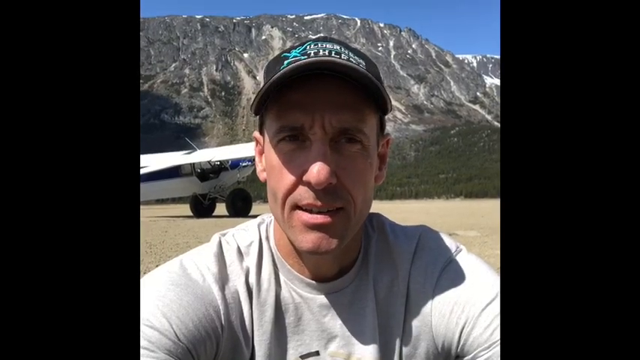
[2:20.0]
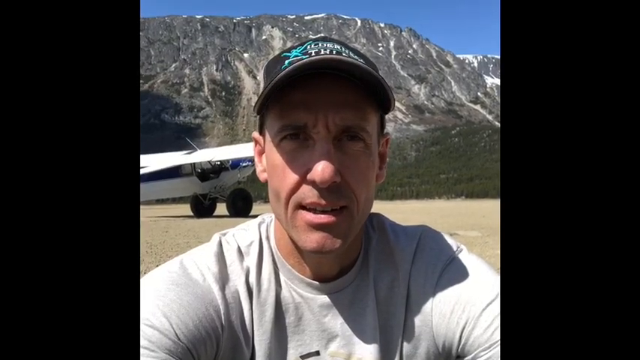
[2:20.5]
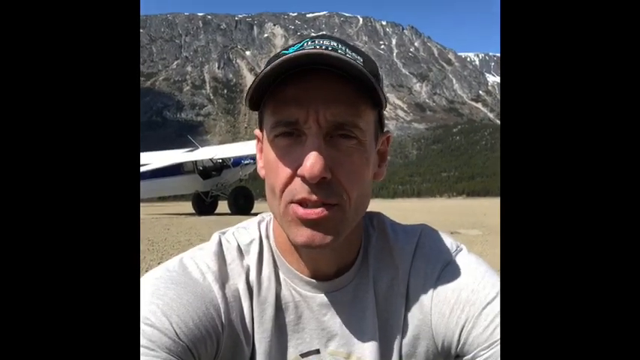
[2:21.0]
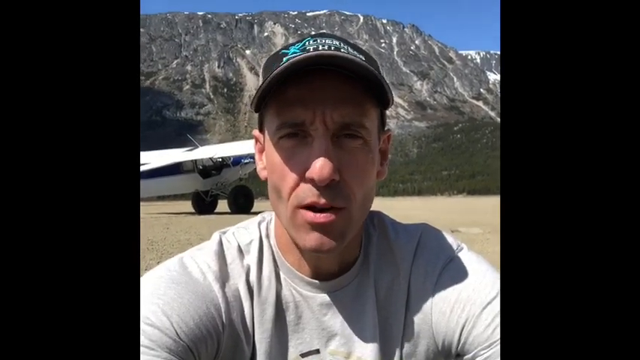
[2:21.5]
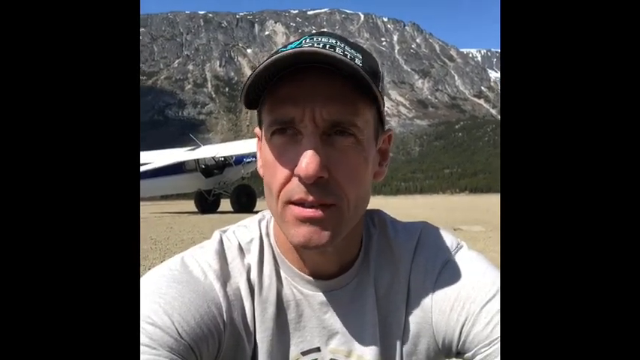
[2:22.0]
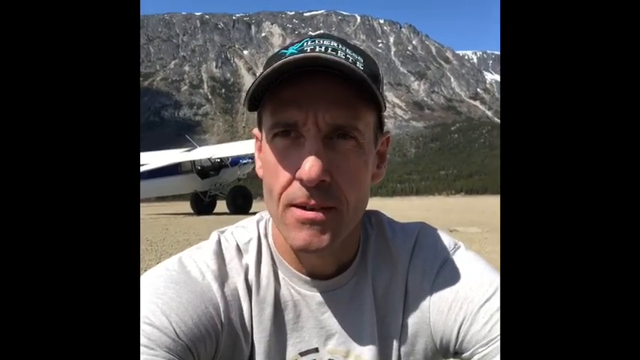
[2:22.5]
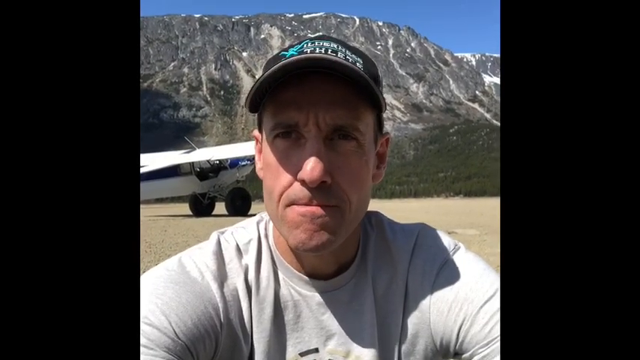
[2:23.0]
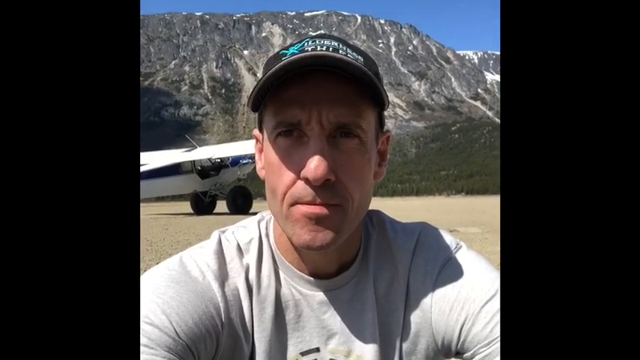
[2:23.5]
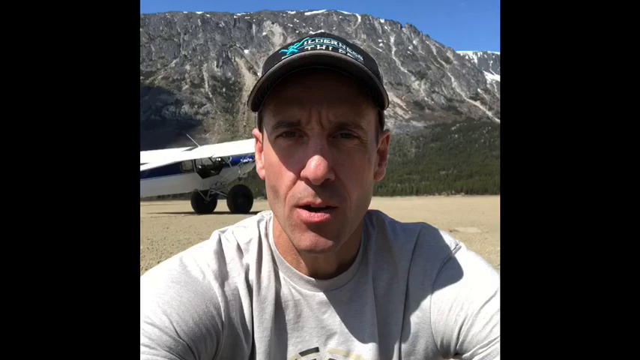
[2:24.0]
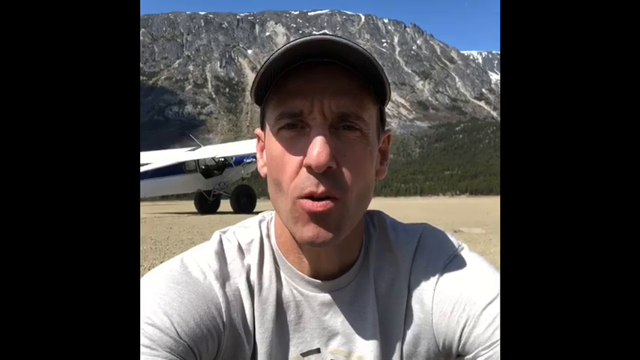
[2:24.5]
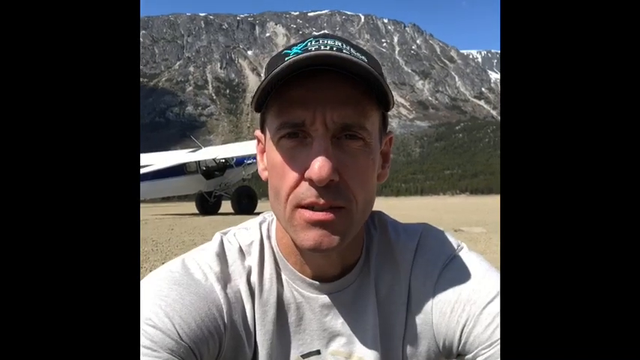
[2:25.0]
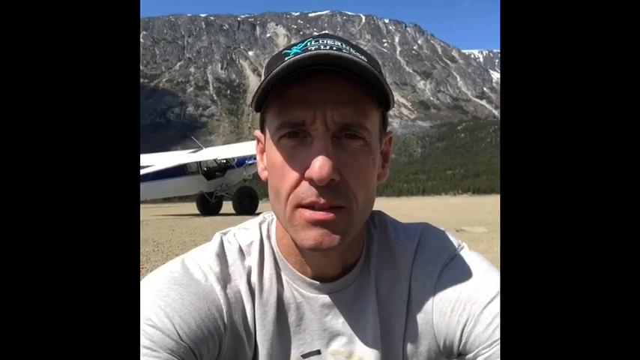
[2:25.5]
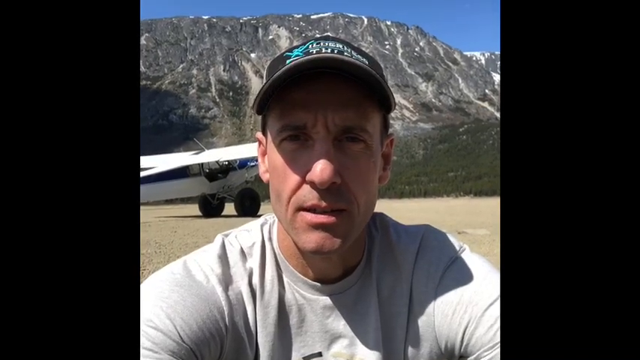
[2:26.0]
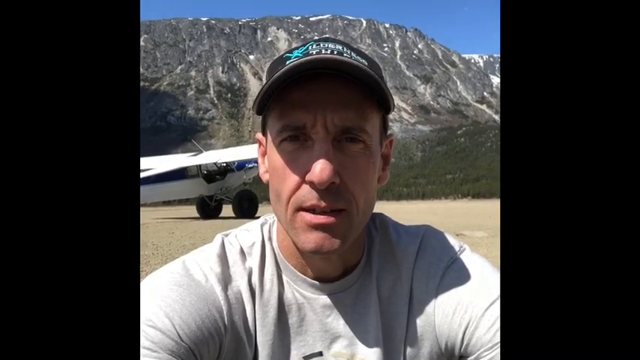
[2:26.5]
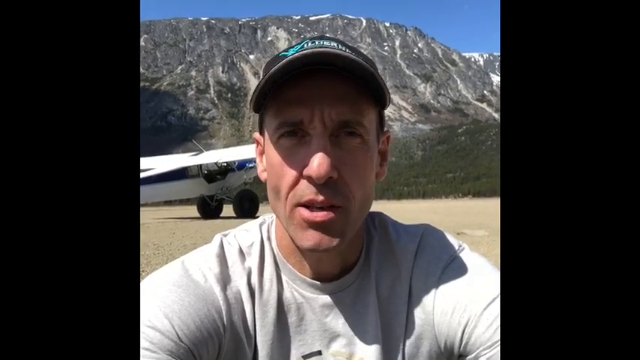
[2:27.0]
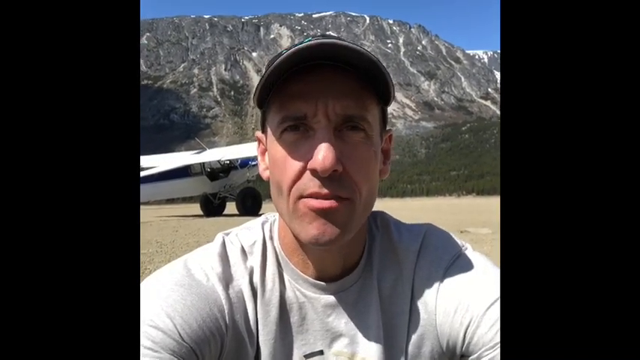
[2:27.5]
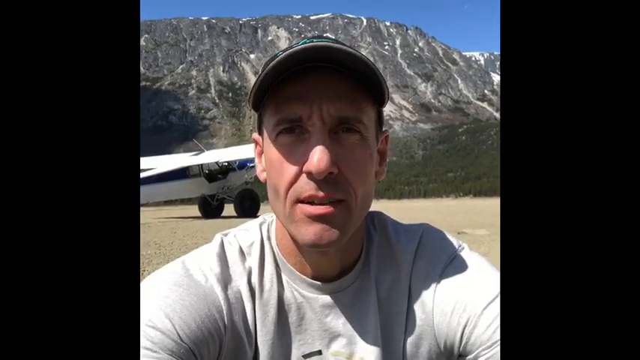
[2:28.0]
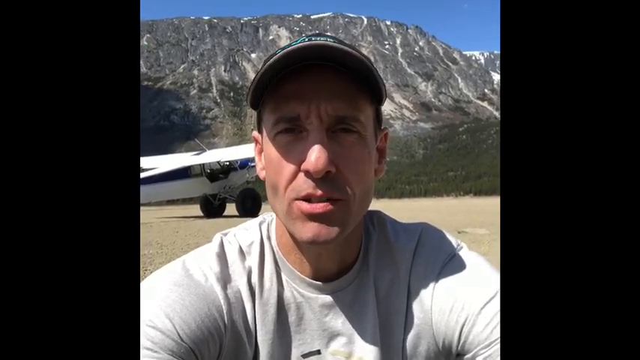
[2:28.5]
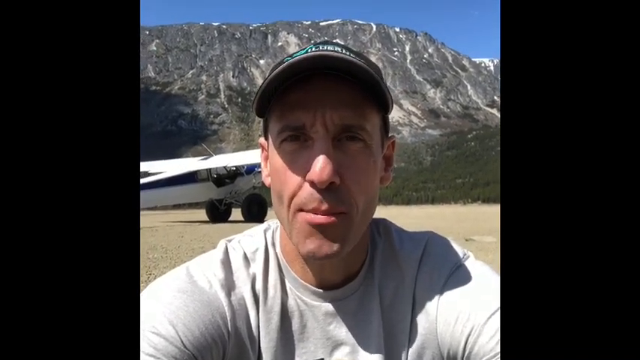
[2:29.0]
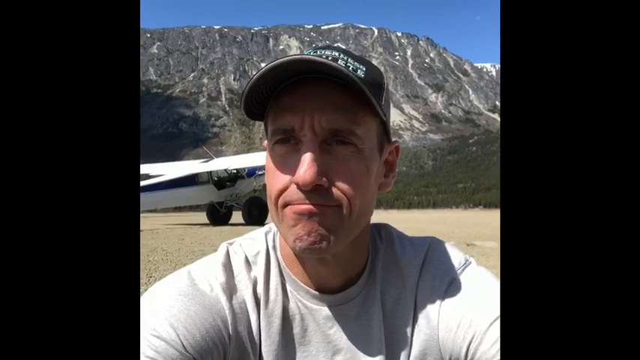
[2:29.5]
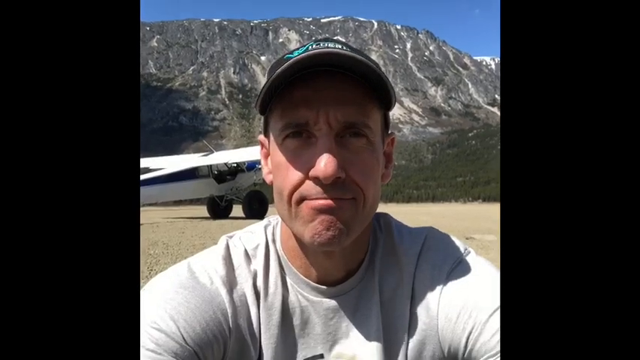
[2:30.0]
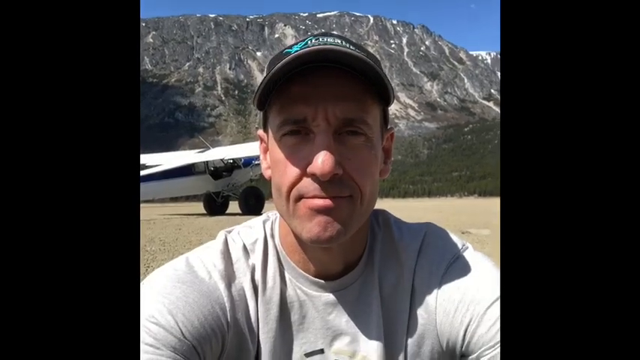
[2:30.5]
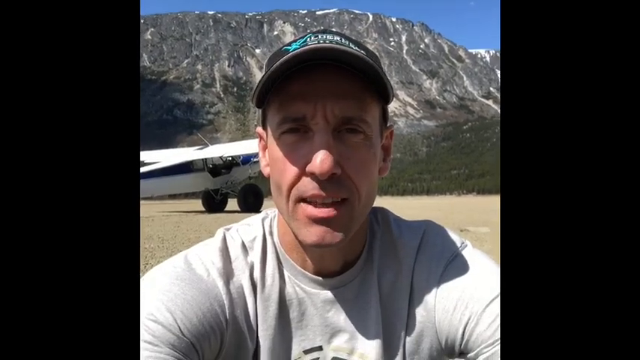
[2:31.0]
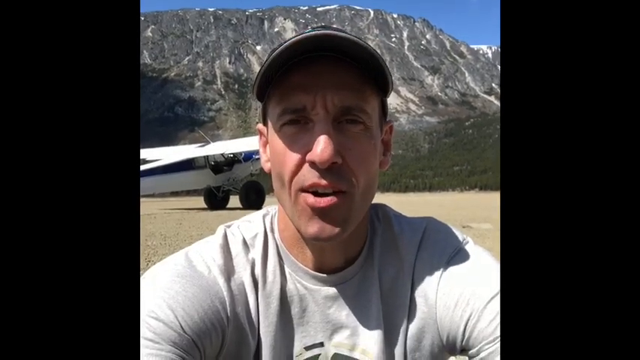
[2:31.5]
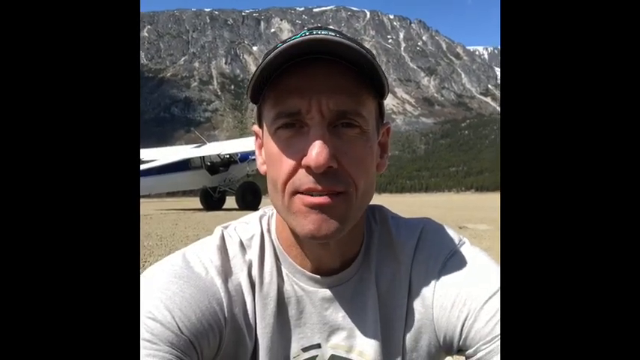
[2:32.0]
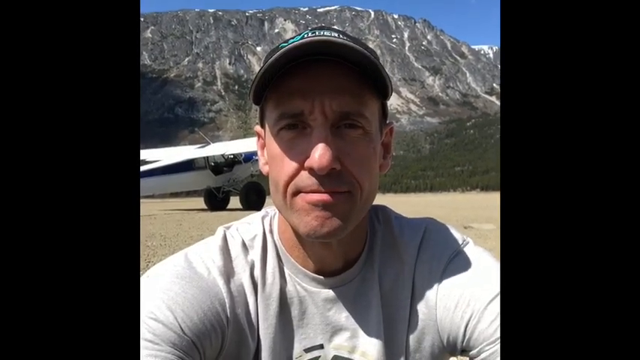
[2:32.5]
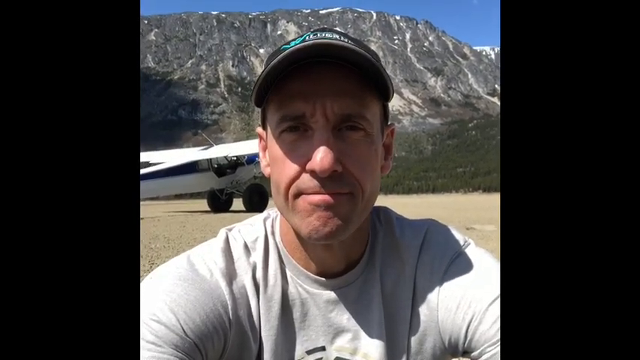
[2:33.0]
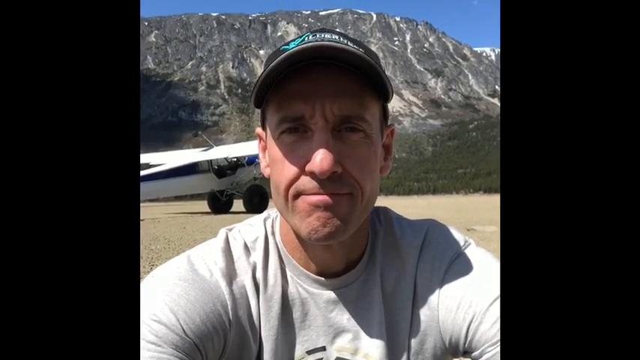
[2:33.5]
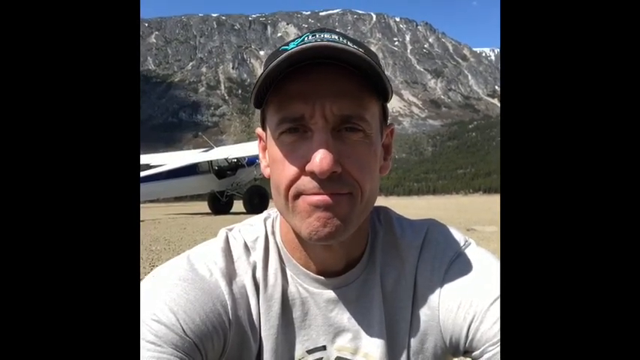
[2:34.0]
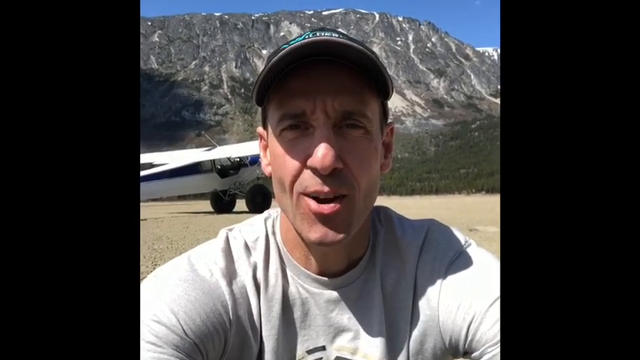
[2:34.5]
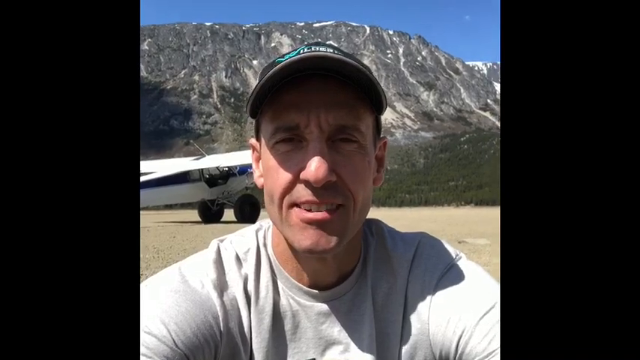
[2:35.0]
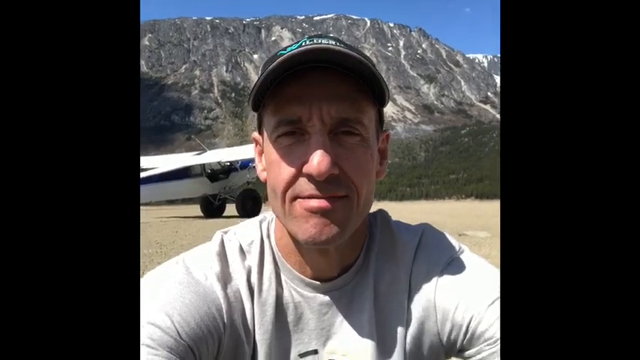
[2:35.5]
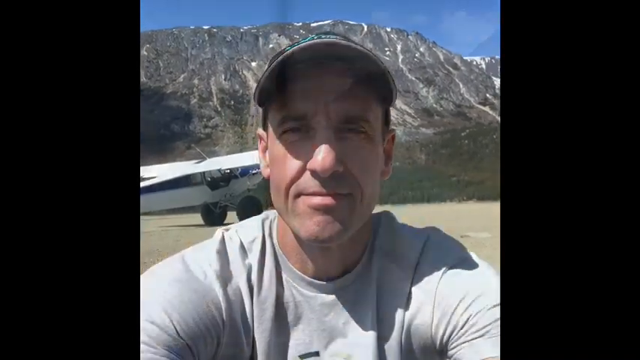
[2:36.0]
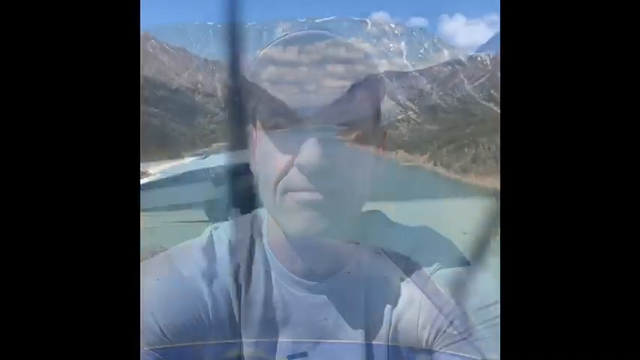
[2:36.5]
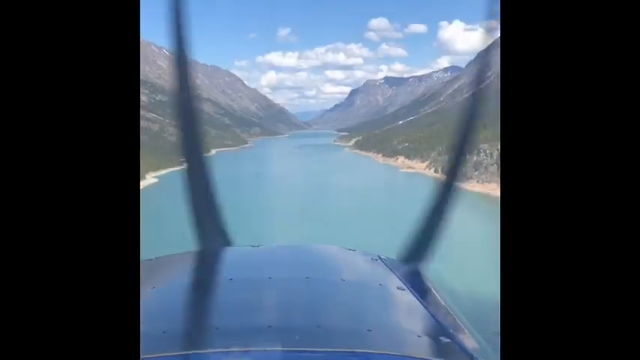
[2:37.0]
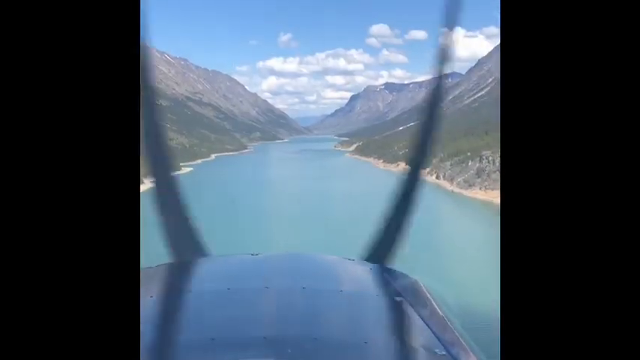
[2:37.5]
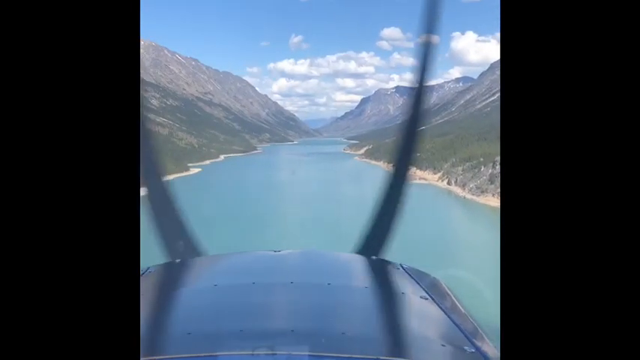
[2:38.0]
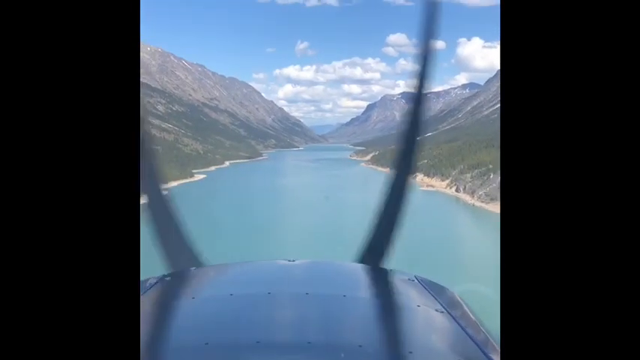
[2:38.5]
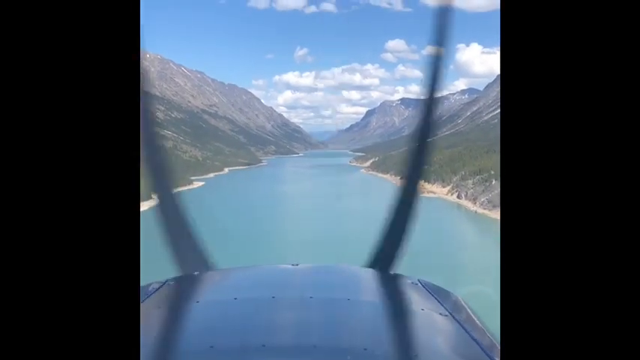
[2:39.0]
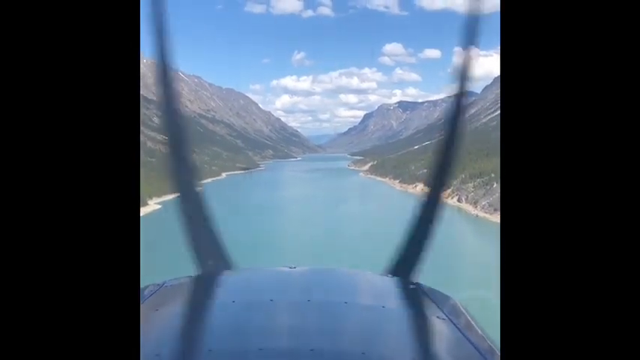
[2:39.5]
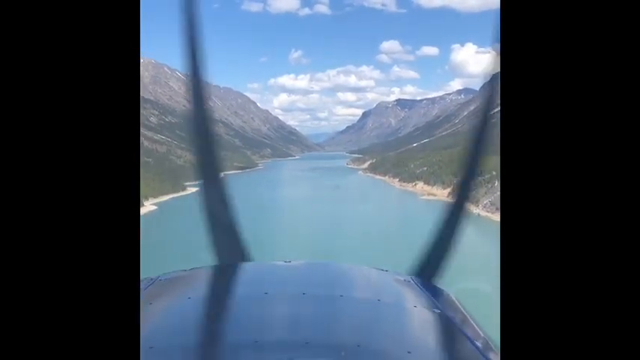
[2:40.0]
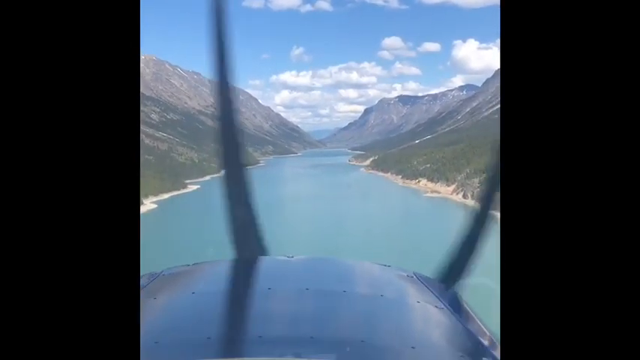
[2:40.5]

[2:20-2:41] A man speaks, seen from about the shoulders up, apparently holding the camera with both arms stretched out in front of him. He wears a black baseball cap whose shadow covers his eyes and nose, so his eyes are barely visible. Behind him is a flat brown area with a mountain in the background, and a white airplane is sitting on the flat area. He makes a very angry gesture with his mouth, moving his head only slightly, and continues to speak, expressing strong emotion. He looks very grim as he pauses. The view cuts to the cockpit of an airplane, with the gray nose of the plane in front and propellers continuously moving clockwise through the view. Ahead of the plane is a mountain stream, with mountains on either side and a blue, partly cloudy sky in the background.